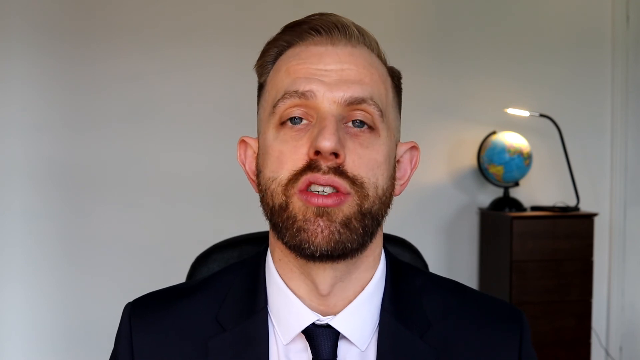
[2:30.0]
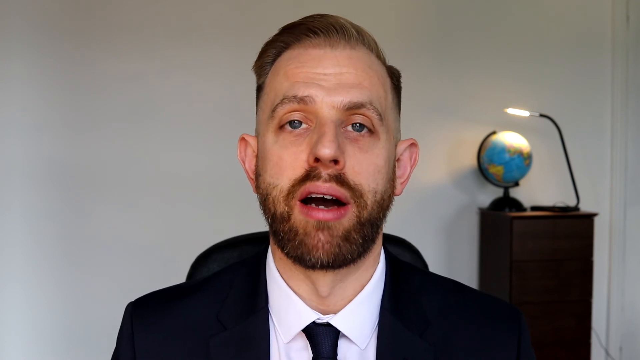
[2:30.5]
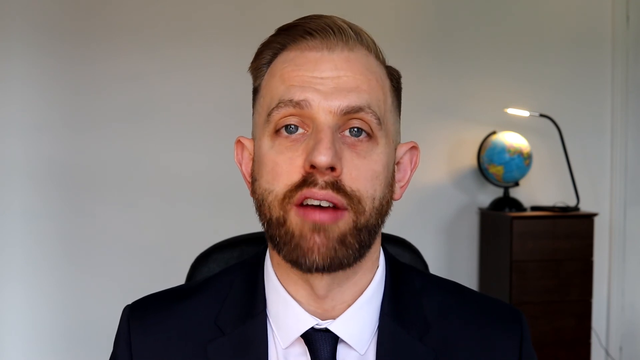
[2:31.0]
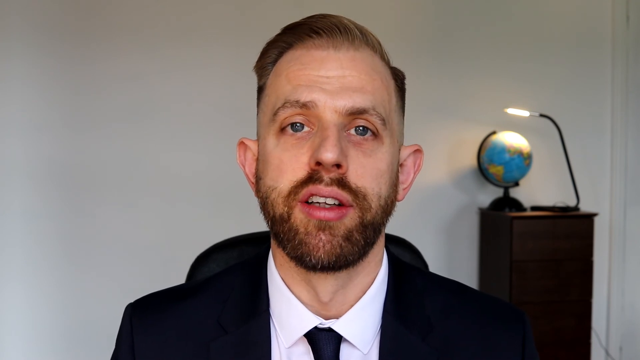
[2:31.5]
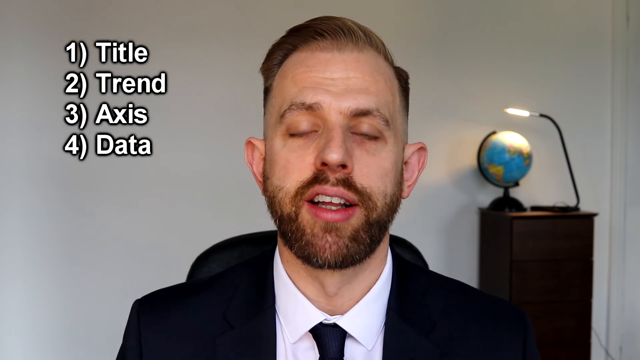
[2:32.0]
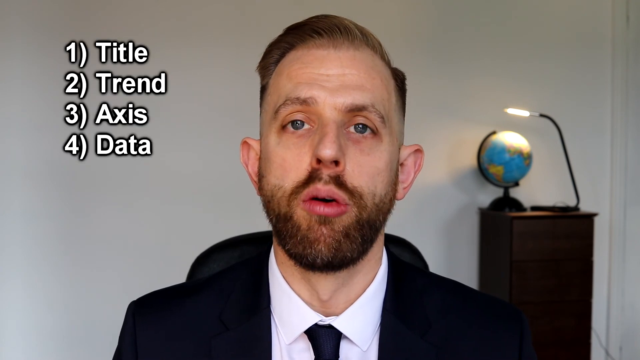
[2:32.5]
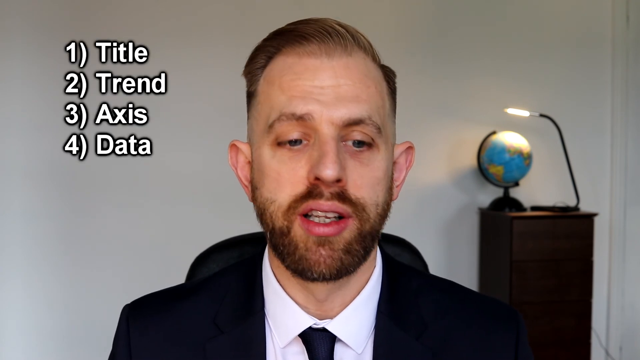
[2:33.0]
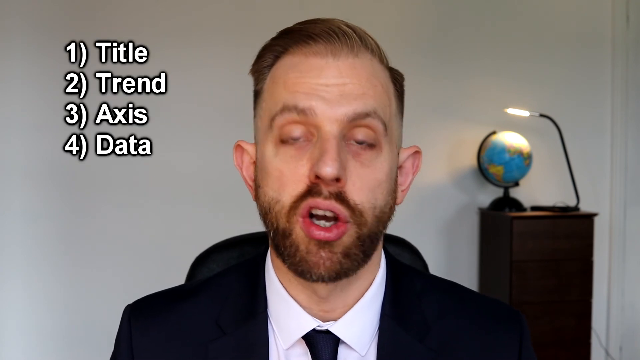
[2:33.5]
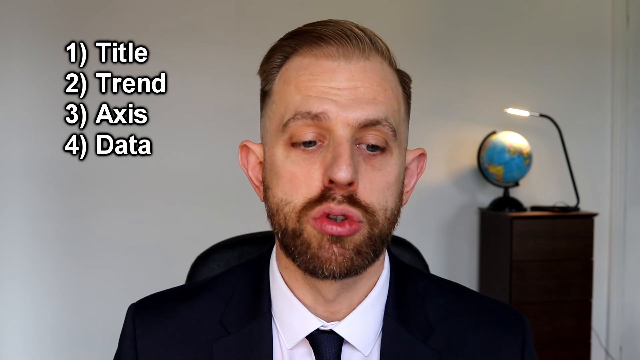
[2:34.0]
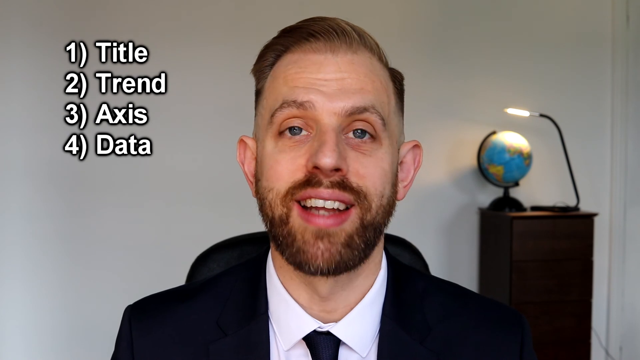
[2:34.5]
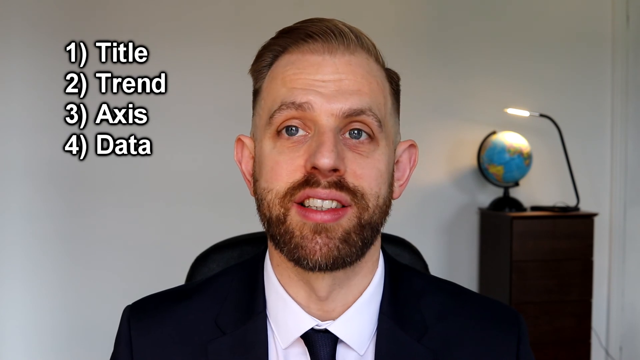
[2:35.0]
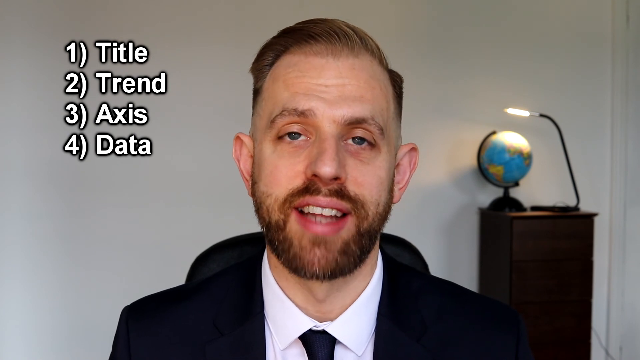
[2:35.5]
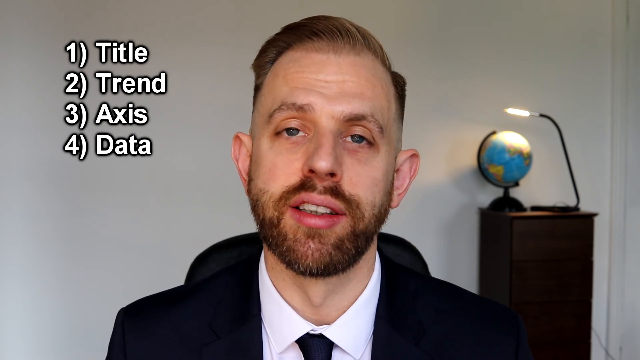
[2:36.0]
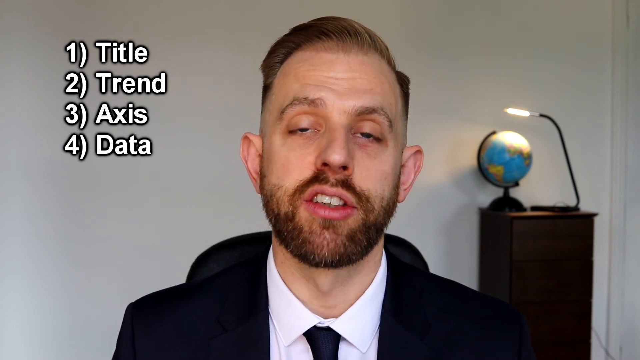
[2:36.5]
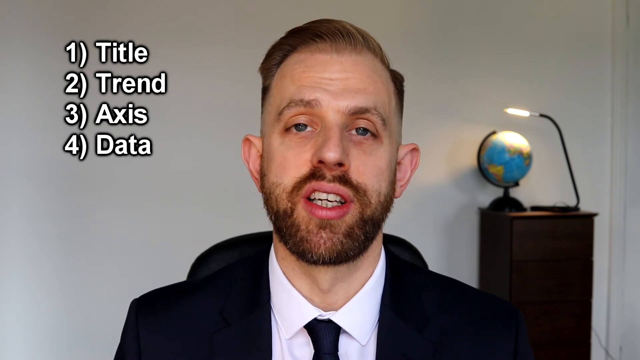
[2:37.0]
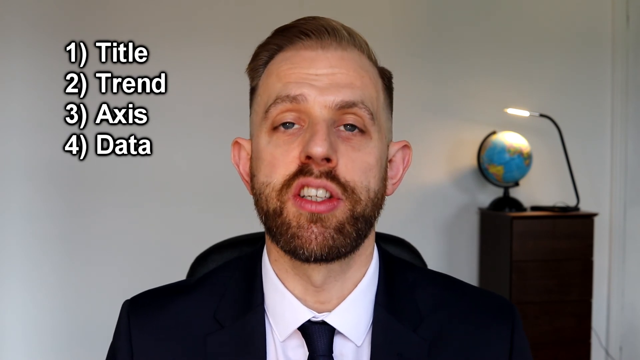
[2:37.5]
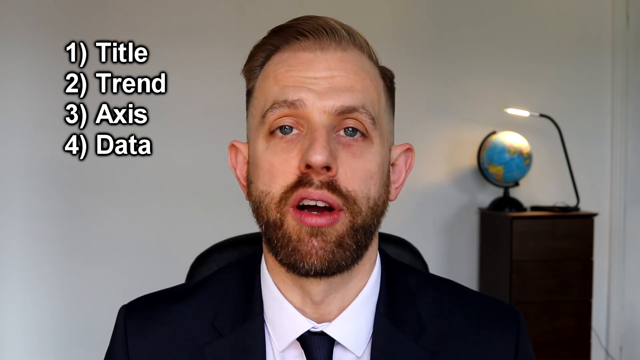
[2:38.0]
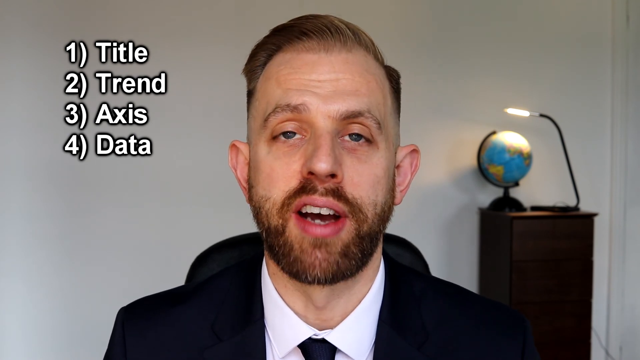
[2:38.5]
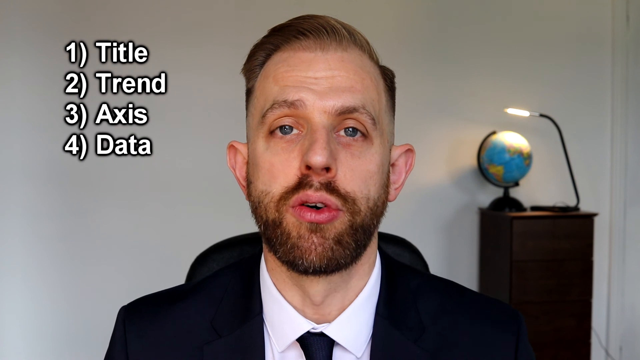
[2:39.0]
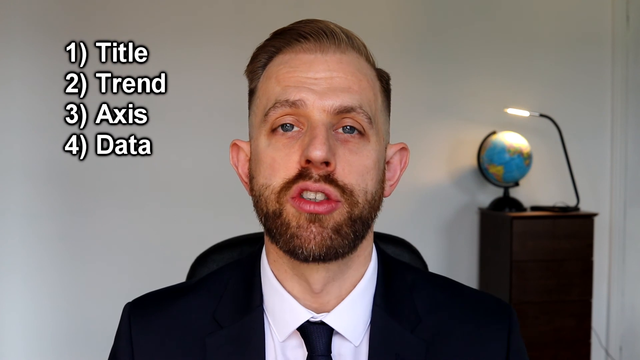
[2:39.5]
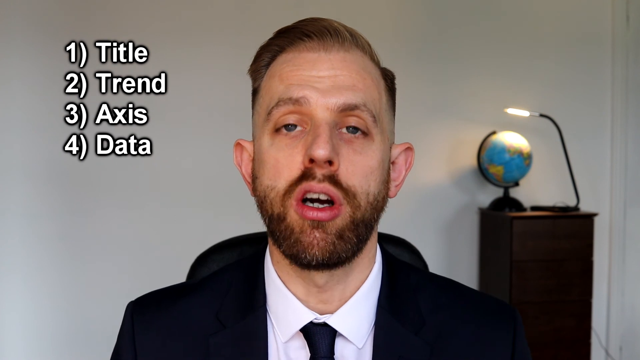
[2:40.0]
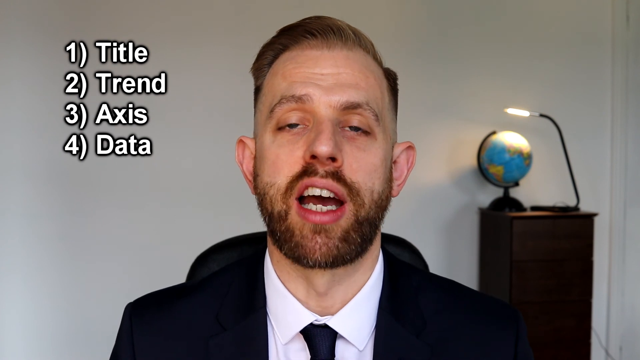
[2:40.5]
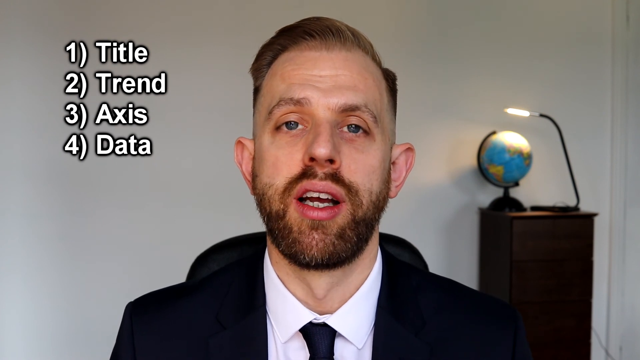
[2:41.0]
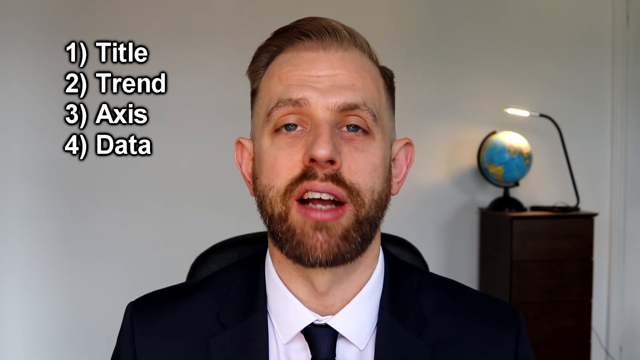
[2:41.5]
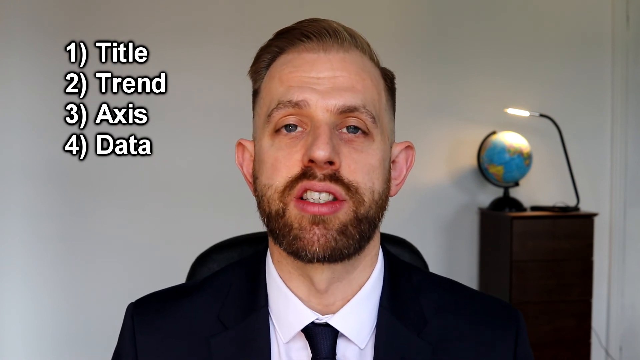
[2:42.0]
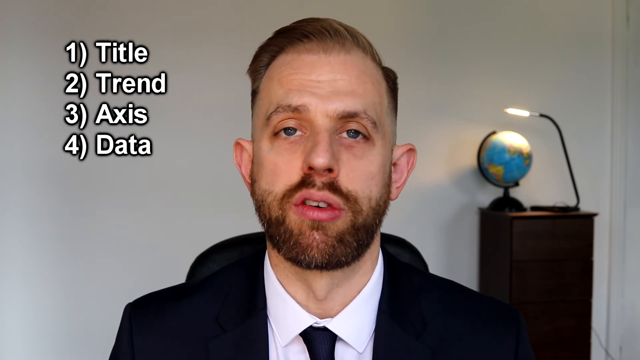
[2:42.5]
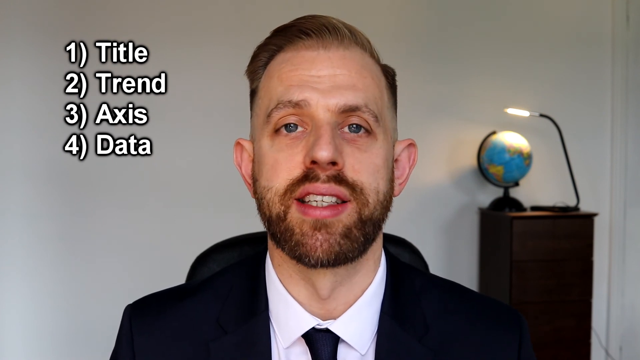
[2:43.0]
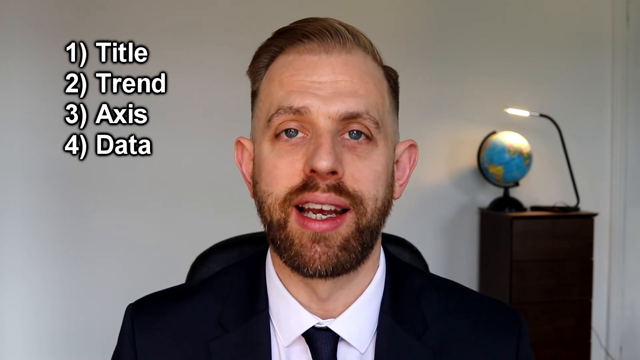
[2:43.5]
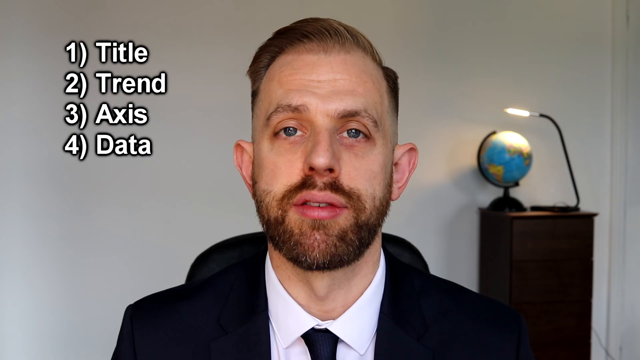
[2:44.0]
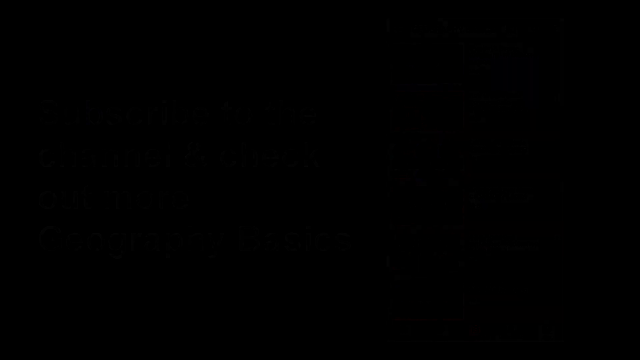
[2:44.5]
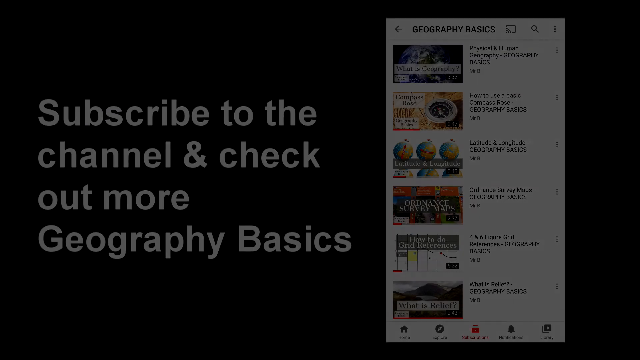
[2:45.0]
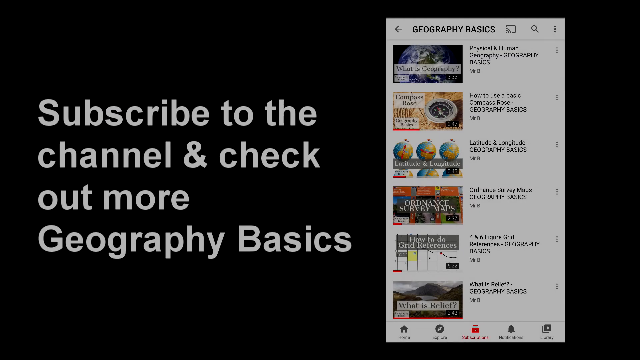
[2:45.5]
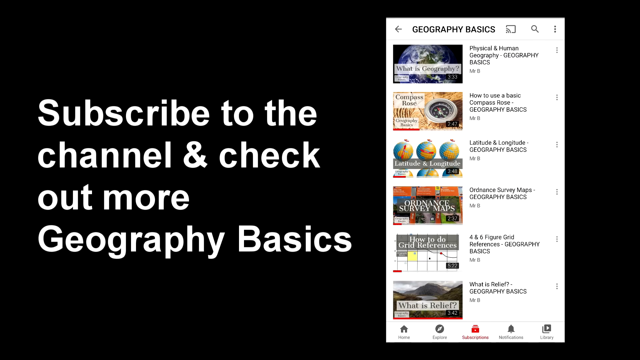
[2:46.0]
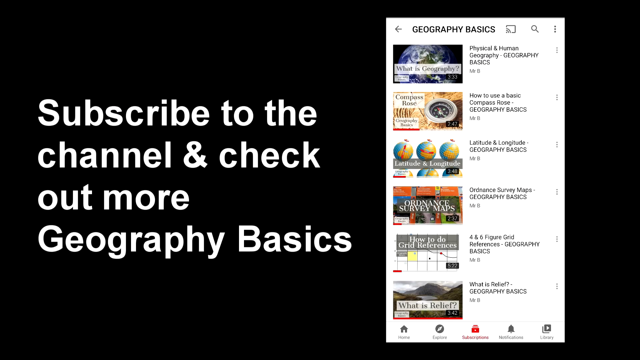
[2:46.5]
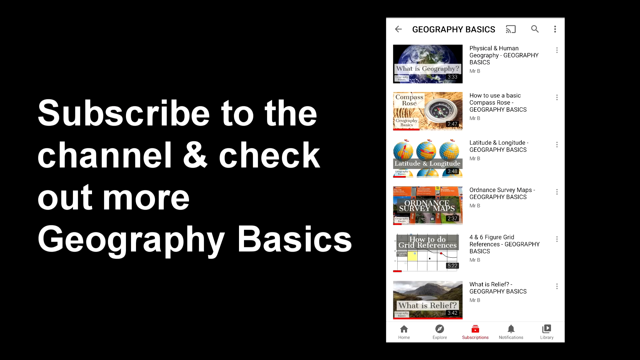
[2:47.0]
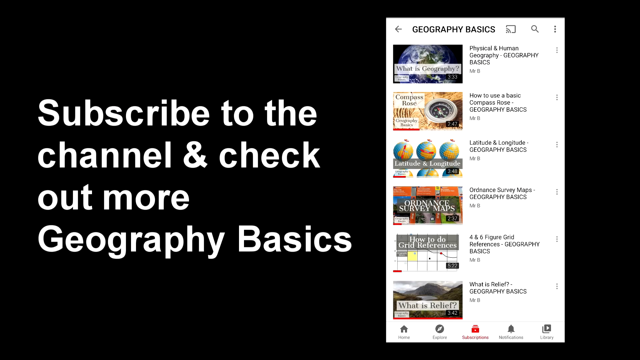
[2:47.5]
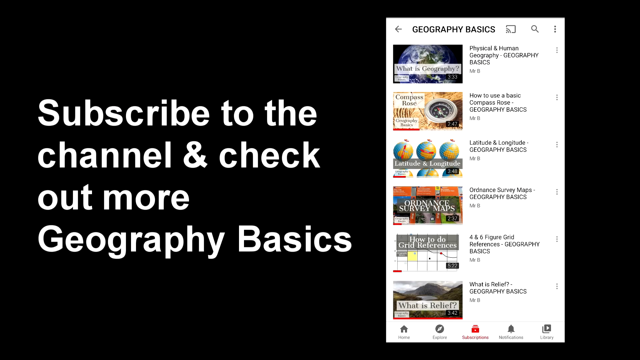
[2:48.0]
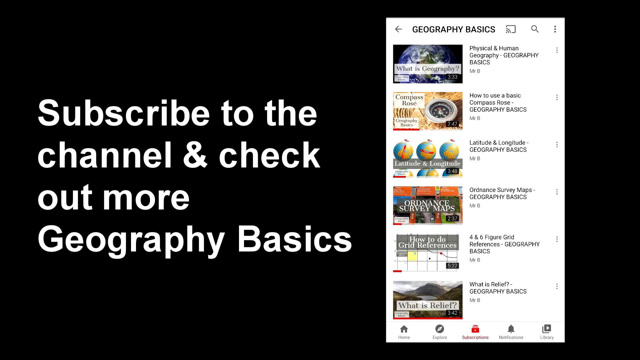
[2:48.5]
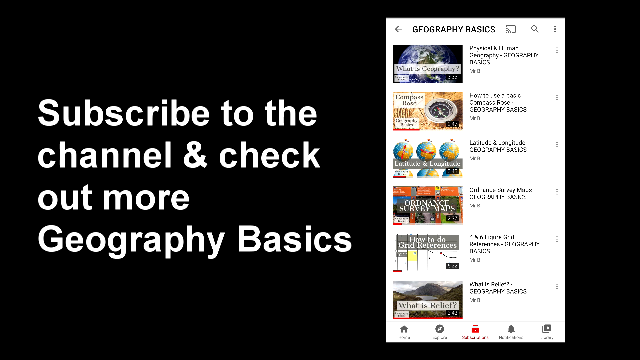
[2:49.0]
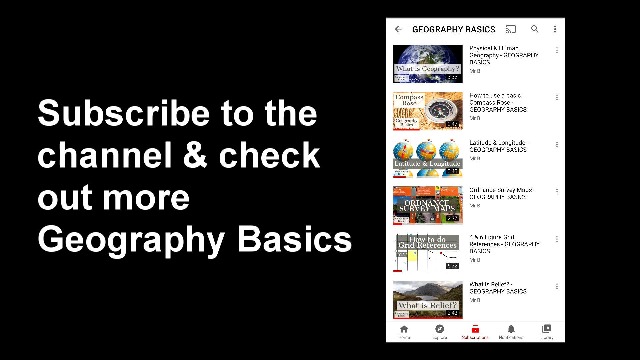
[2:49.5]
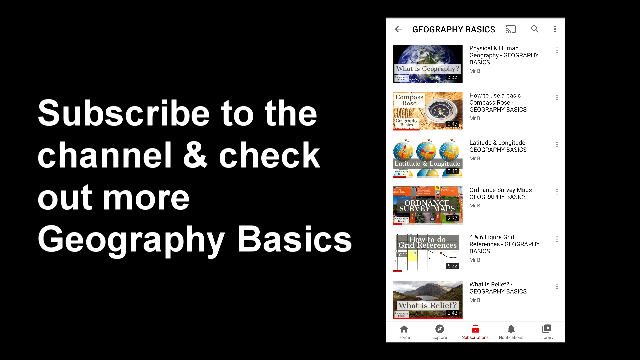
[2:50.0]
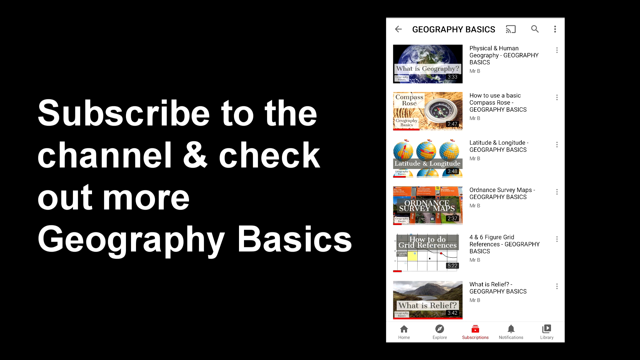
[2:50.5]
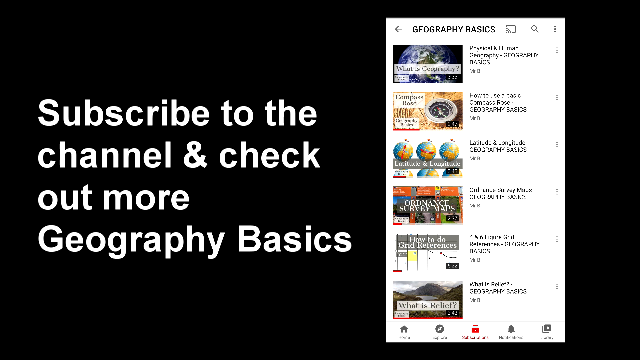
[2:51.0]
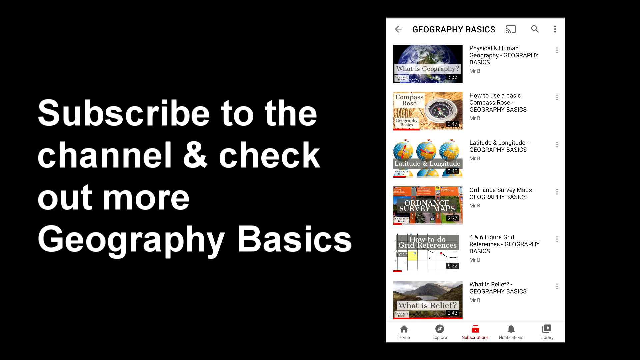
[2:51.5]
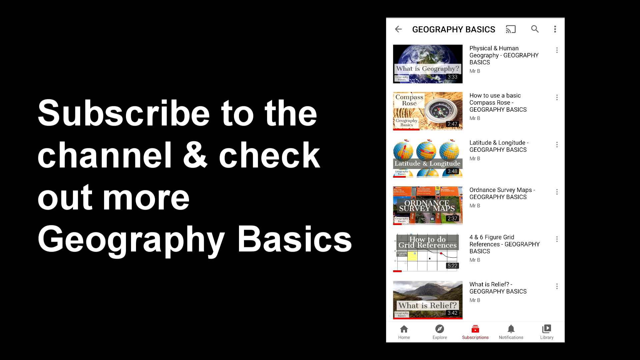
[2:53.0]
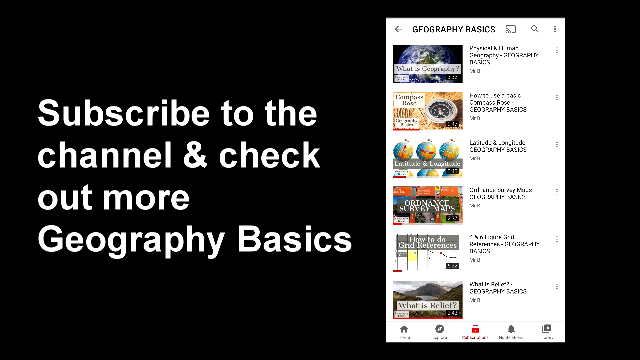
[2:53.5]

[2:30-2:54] The graph shows the gross domestic product and industries fluctuating throughout the year, with some rising and some dropping. The industry dotted in yellow is shown rising.